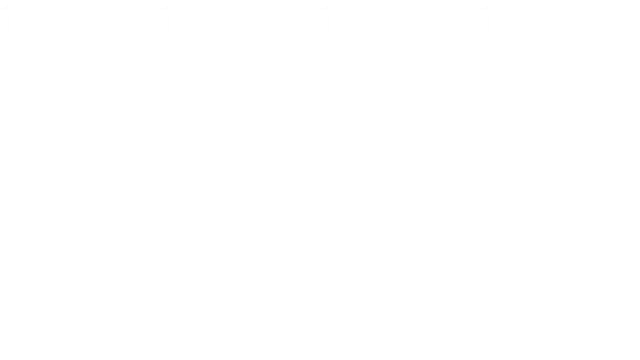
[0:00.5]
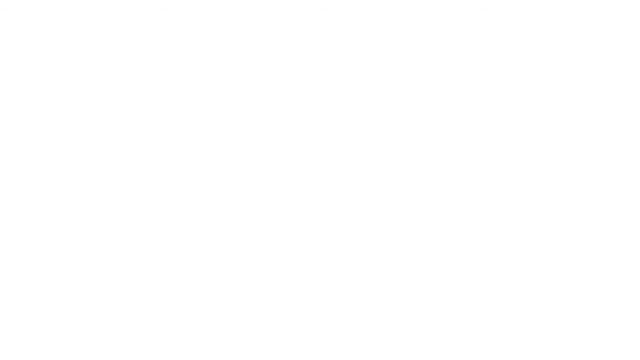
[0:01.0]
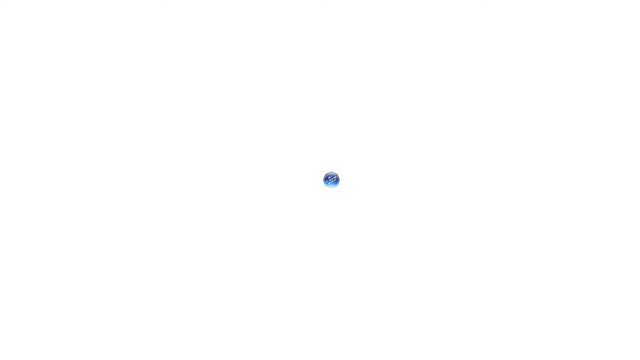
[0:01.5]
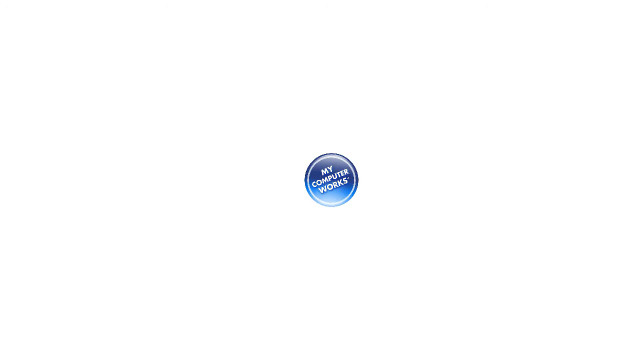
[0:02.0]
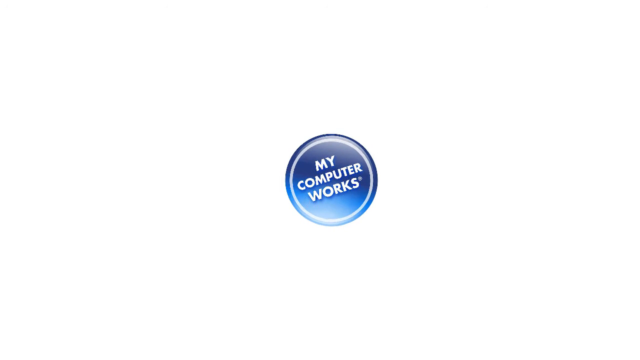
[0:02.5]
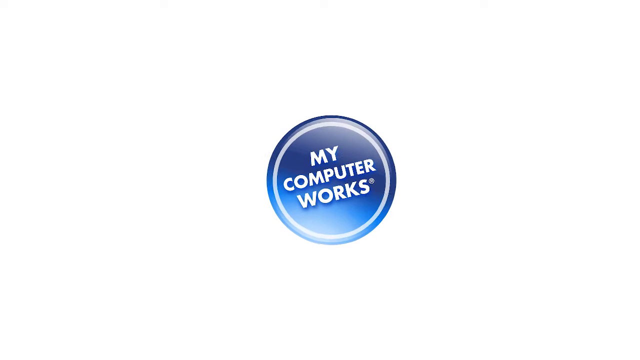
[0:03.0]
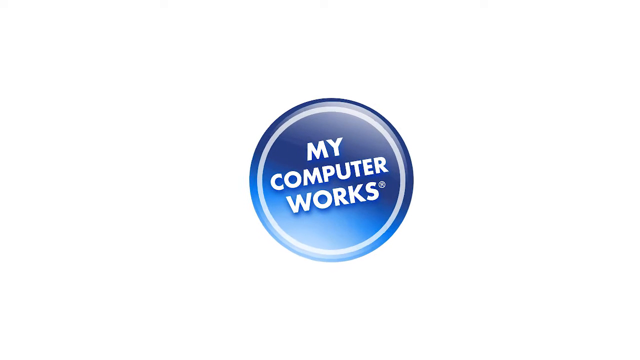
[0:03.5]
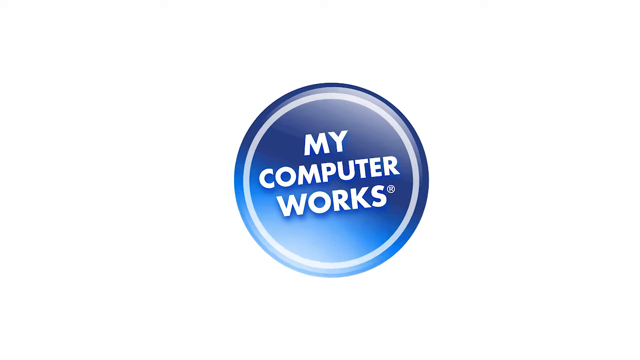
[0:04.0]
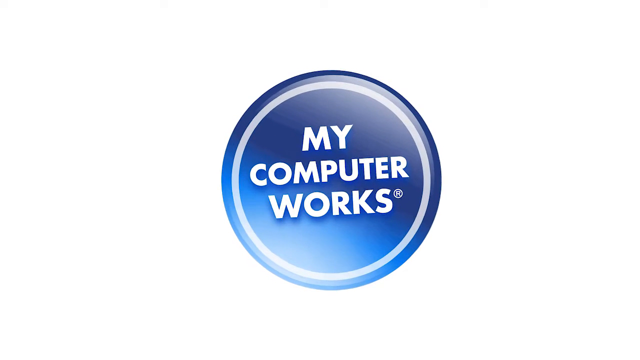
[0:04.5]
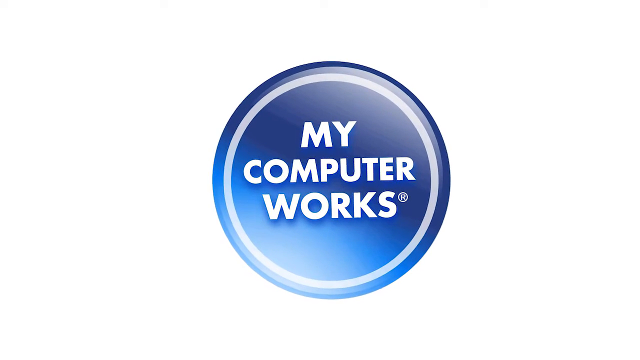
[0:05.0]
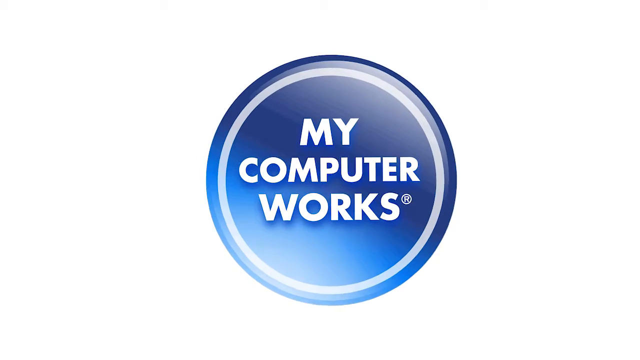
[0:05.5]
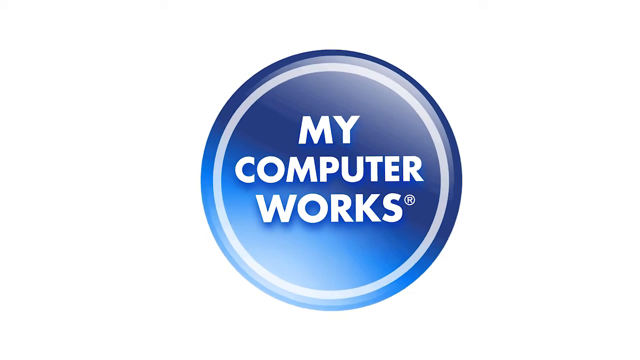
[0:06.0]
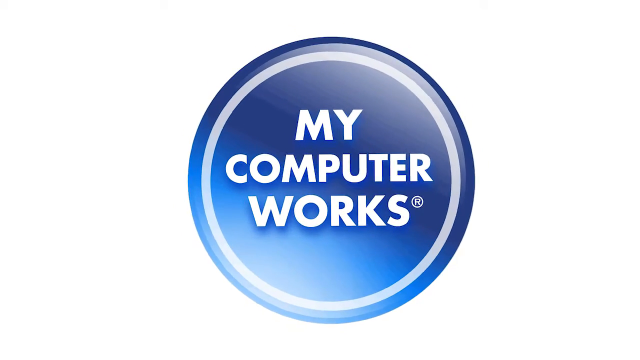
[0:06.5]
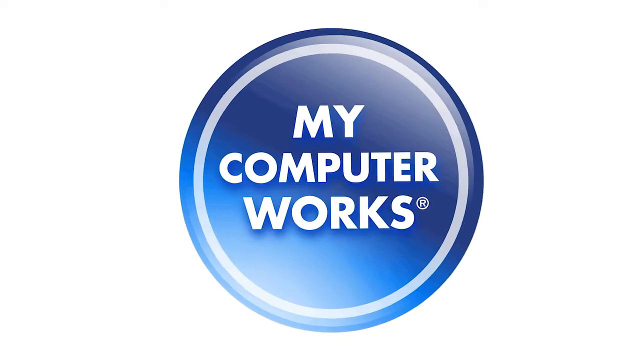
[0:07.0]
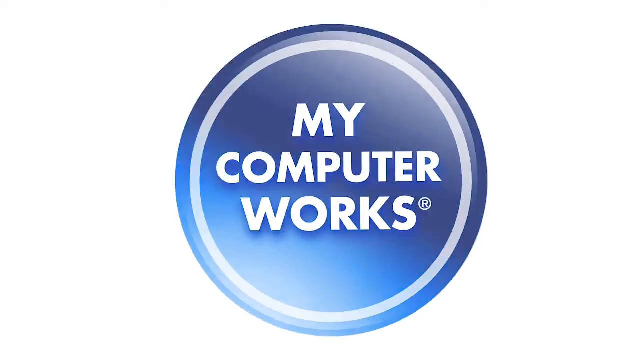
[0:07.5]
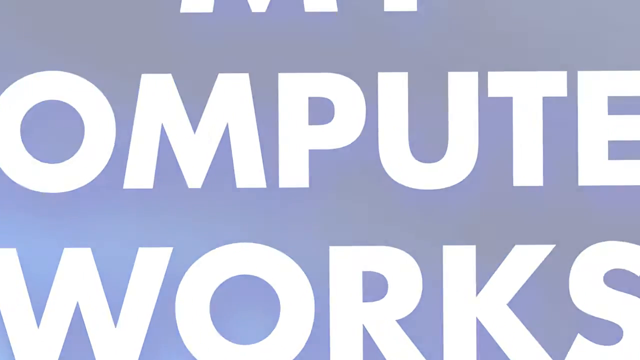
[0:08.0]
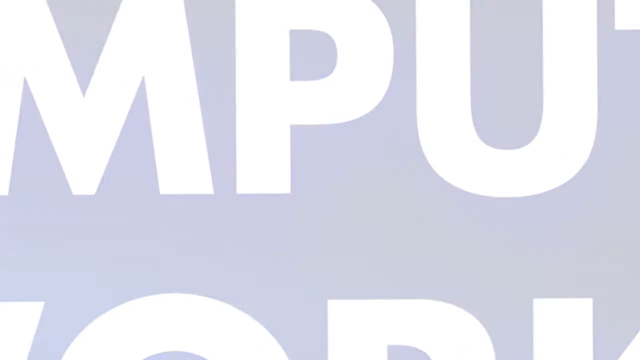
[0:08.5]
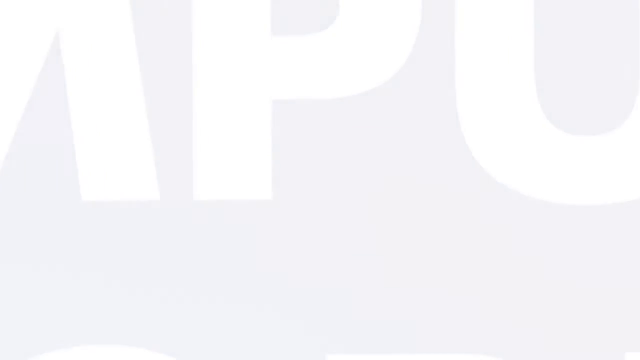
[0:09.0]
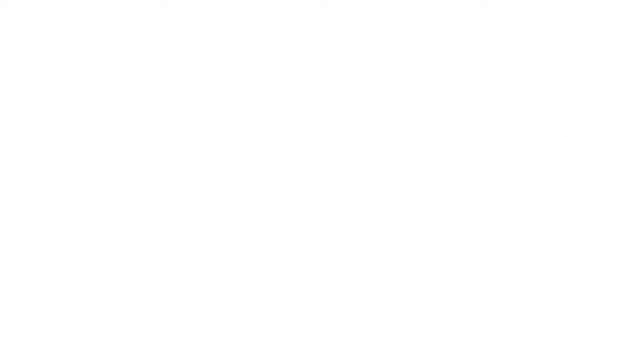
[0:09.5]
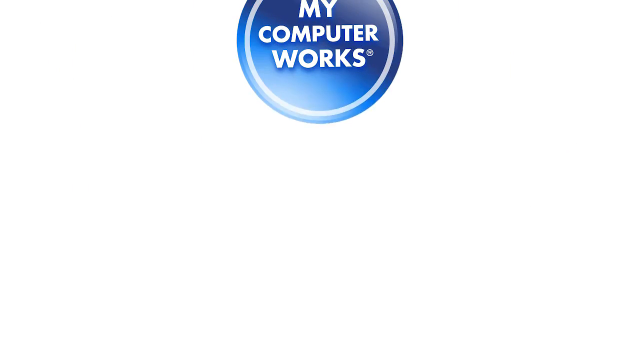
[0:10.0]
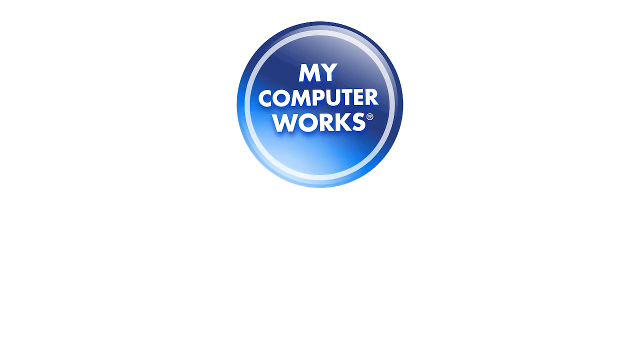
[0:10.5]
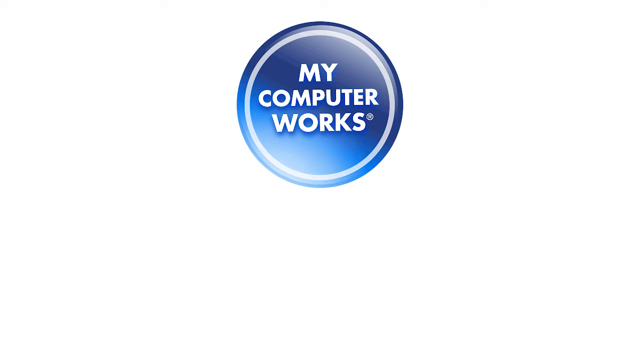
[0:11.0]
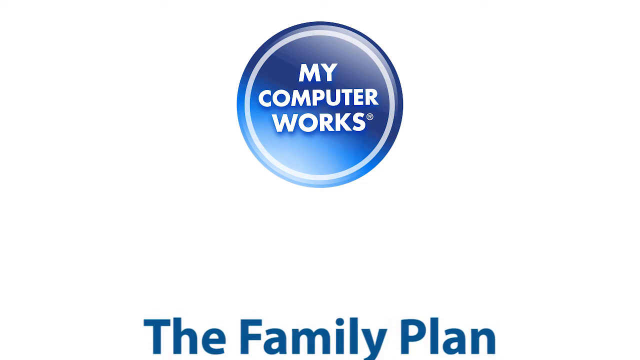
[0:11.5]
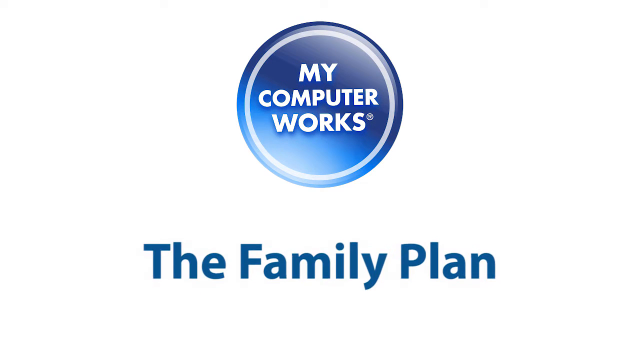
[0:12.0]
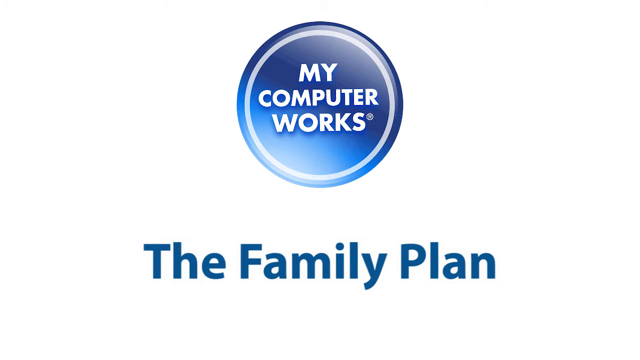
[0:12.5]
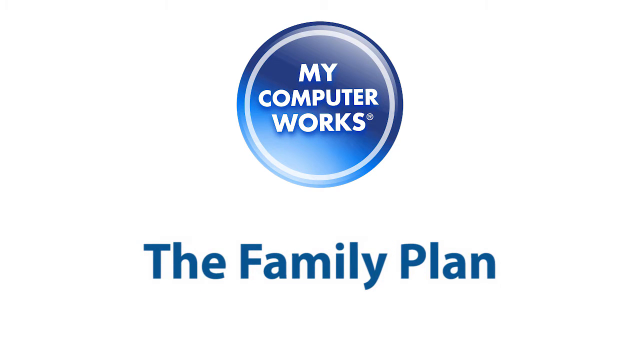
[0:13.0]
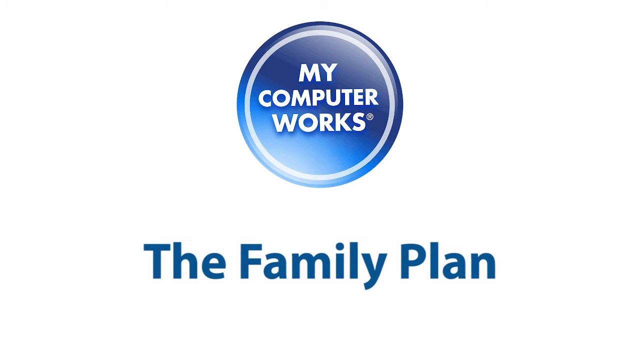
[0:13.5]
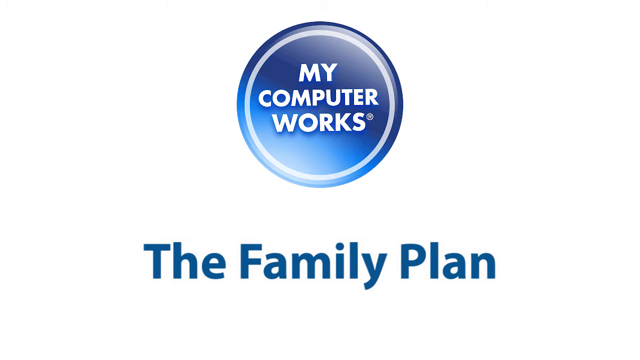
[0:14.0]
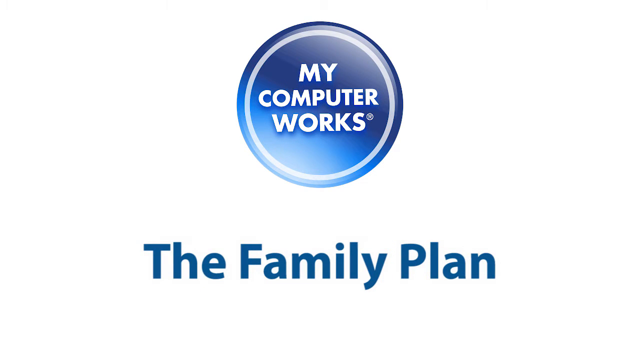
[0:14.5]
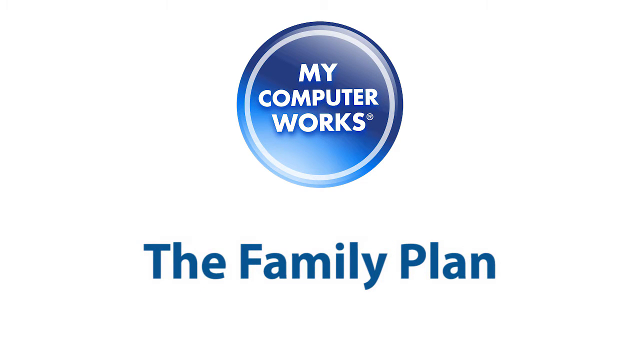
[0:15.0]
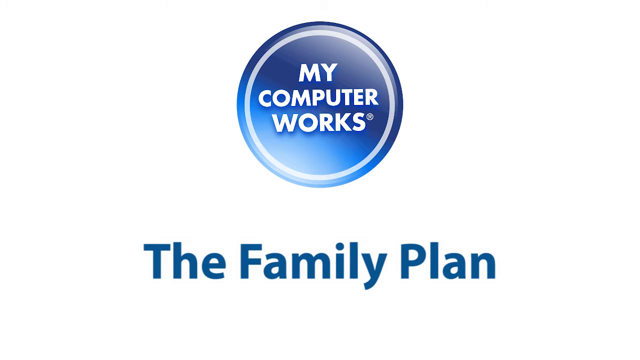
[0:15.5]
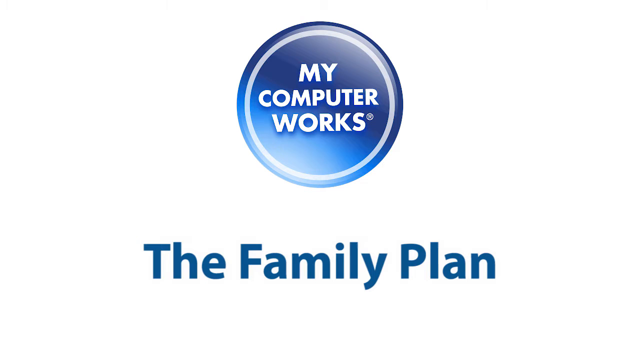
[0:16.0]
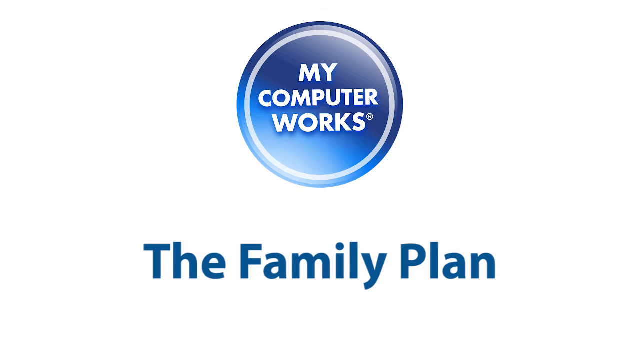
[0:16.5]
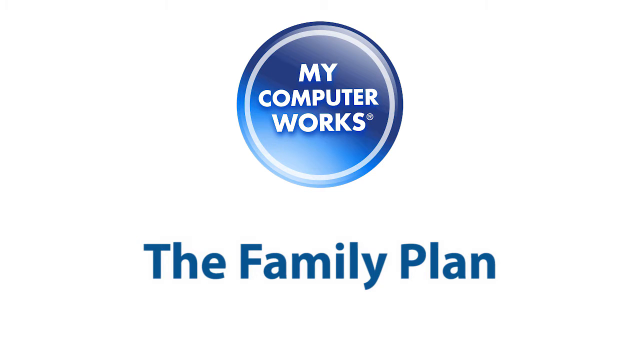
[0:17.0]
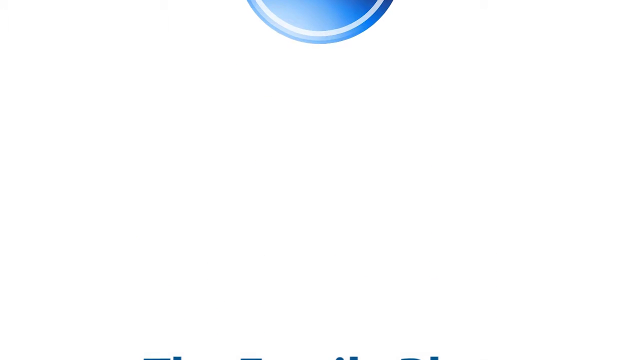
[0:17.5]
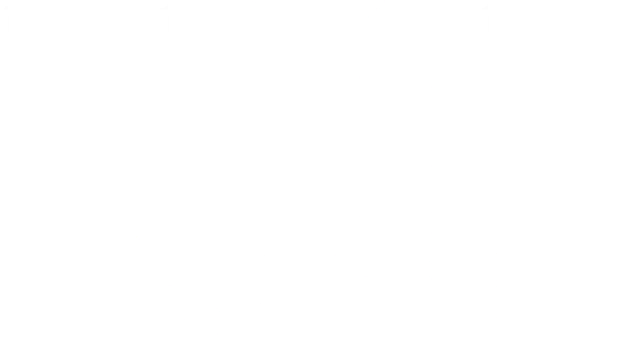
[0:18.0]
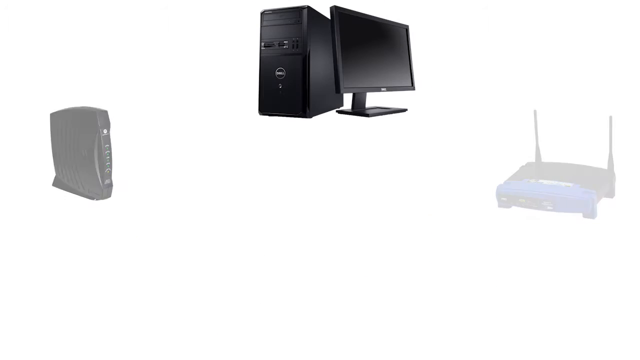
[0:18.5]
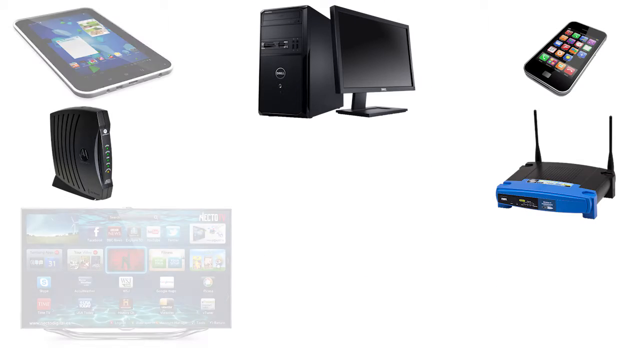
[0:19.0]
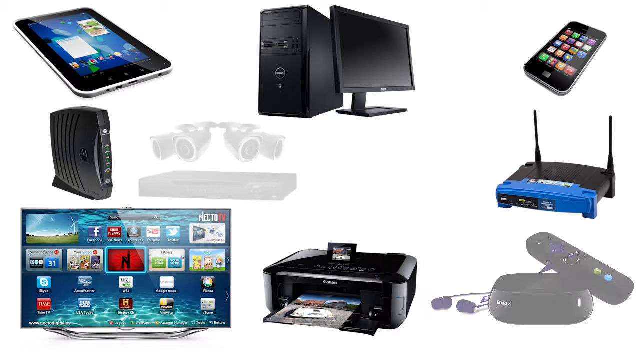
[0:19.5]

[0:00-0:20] The video opens on a completely white screen before a blue circle emerges from the centre, growing larger and rotating right. The blue circle has a white ring around its outer edge and white text in the middle that says "My Computer Works". The circle grows to a certain point and stops, then suddenly jumps up in size and back again, pulsing larger and smaller repeatedly until it expands to cover the entire field of view and becomes transparent, fading to white. On the white screen, the blue "My Computer Works" circle drops in again, this time from the top, and stops near the top of the screen. Underneath it, blue text appears reading "The Family Plan". The shot holds for several seconds before the circle and the text disappear off the screen in opposite directions, the circle moving up to the top and the text moving down to the bottom. A series of objects then fade in at different locations on the white screen. First comes a black computer monitor and black computer tower in the top middle. To the right of that is an iPhone. Continuing clockwise, there is a router on the right, a remote control for what appears to be a speaker system at the bottom right, a printer in the bottom middle, a TV in the bottom left, another router at the far left, and a tablet in the top left. In the middle of the screen are a PlayStation and controller, a DVD player and some ceiling-mounted lights.